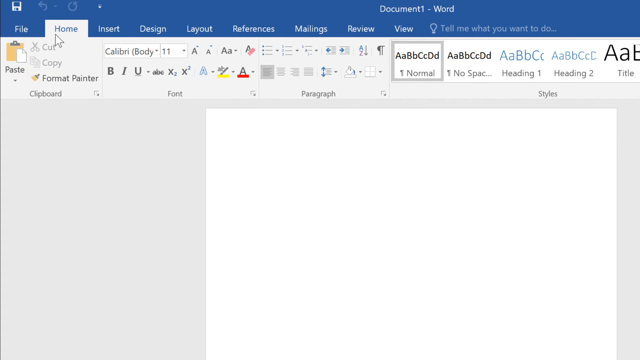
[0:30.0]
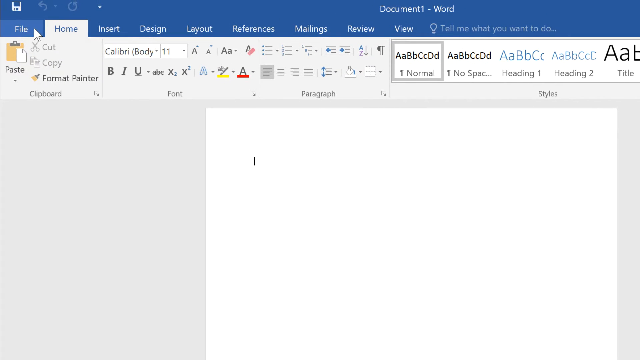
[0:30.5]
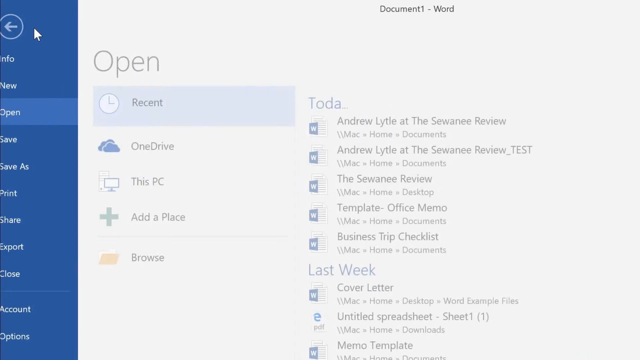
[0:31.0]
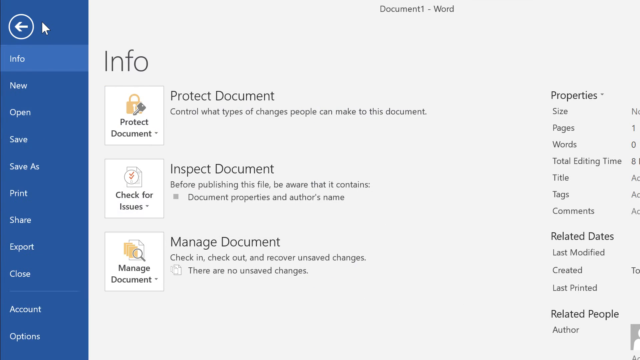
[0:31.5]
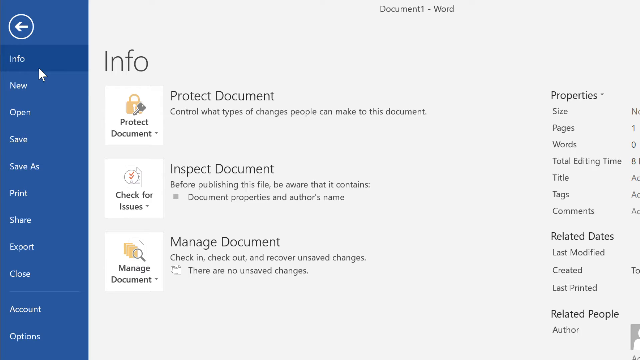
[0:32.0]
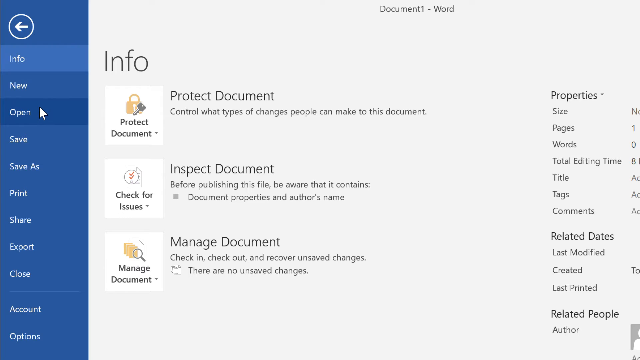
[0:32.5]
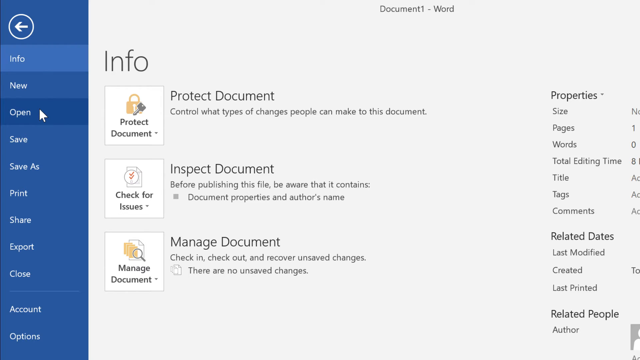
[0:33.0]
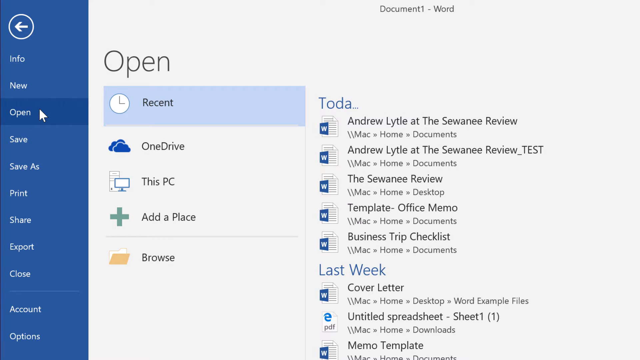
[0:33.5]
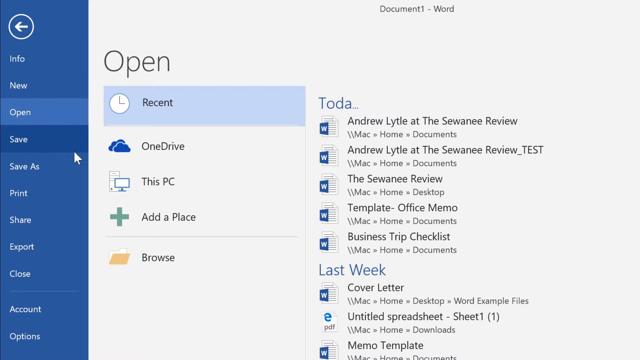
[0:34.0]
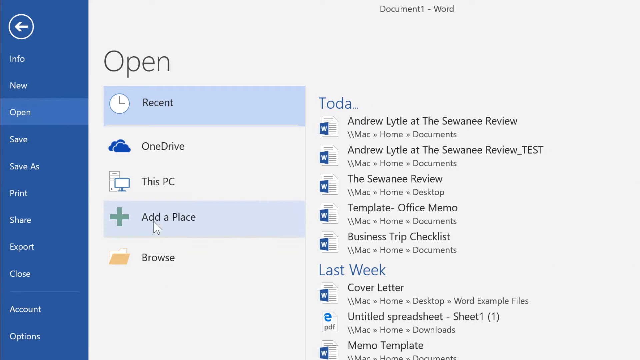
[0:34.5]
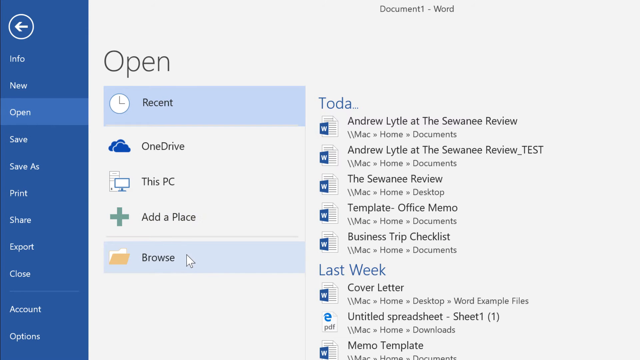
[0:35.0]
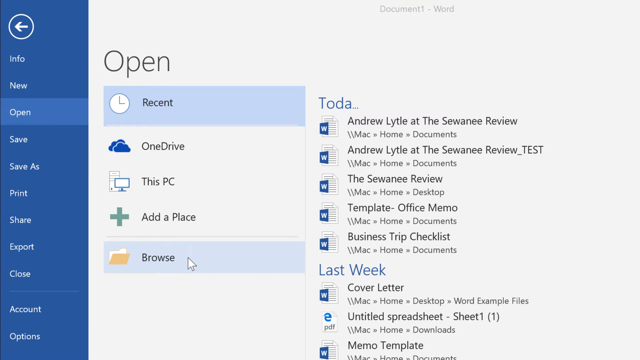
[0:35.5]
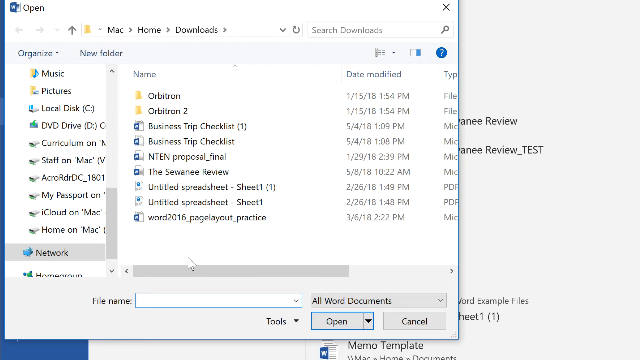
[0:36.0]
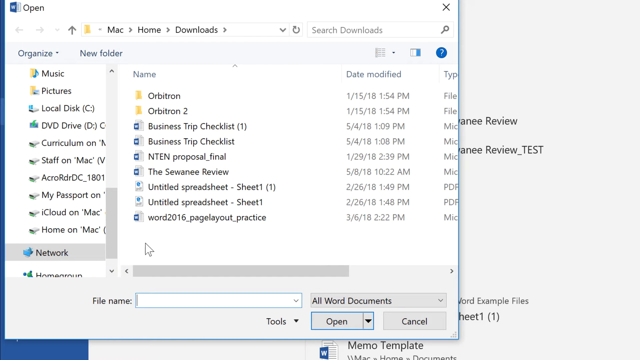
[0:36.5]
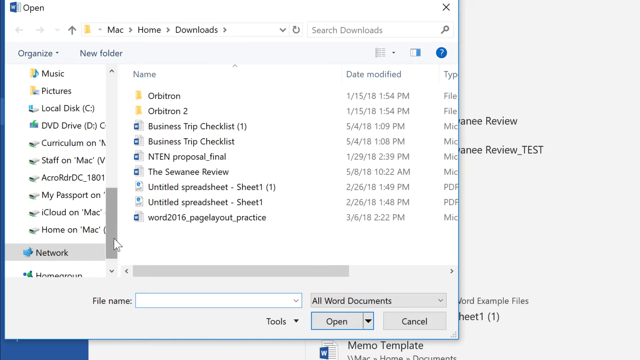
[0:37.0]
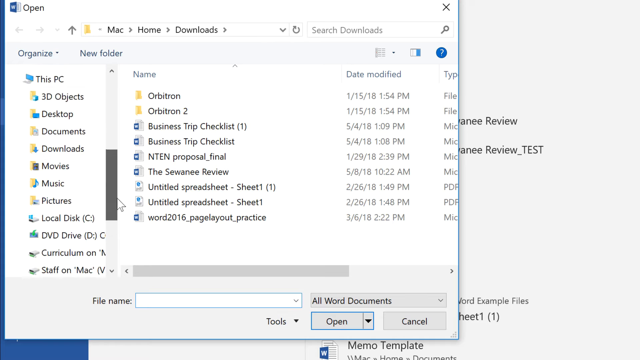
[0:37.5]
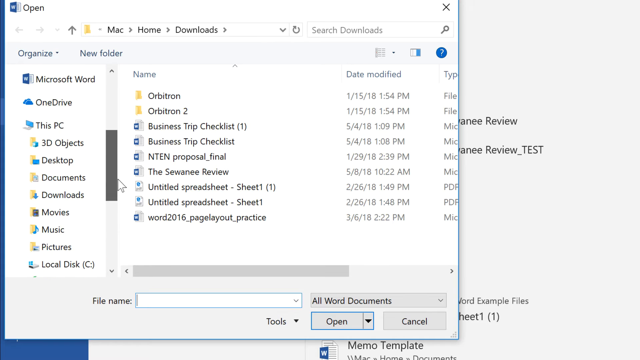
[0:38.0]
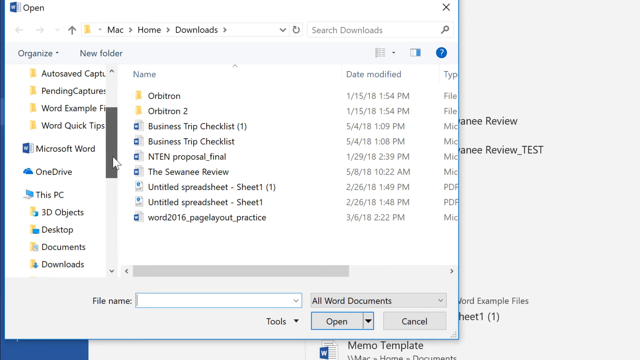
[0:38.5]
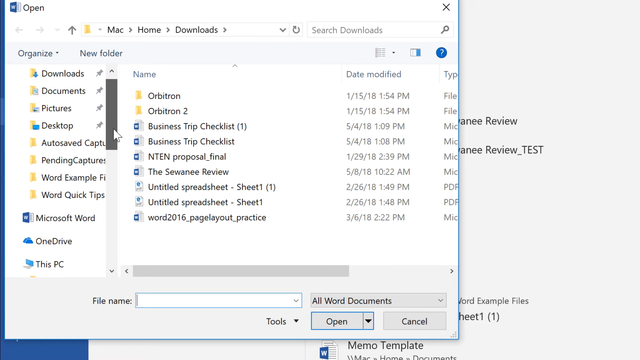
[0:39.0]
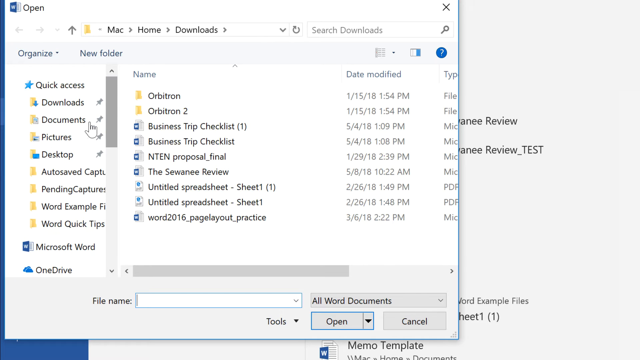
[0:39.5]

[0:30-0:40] Word is open on document one, which indicates nothing has been saved yet. The user scrolls down to Open in the menu, looking for a document to open, and clicks on documents from their computer. The formatting is set to Normal, with the Calibri font at 11 point size.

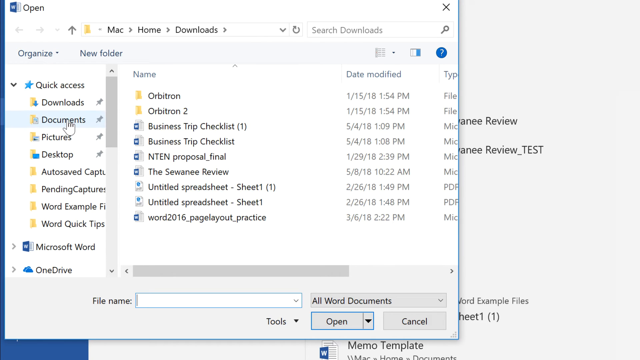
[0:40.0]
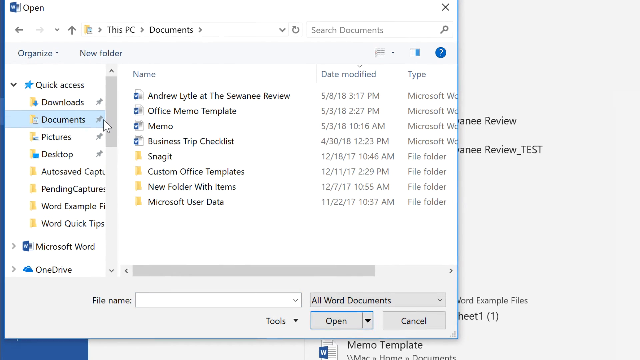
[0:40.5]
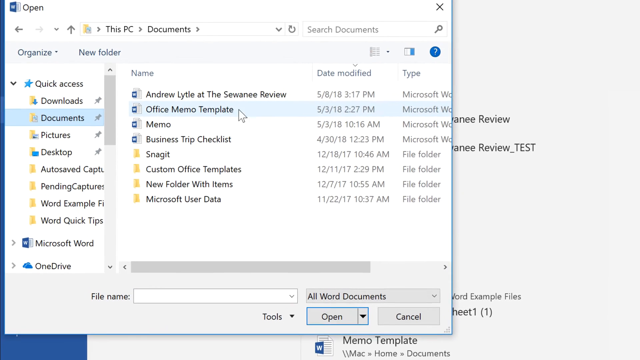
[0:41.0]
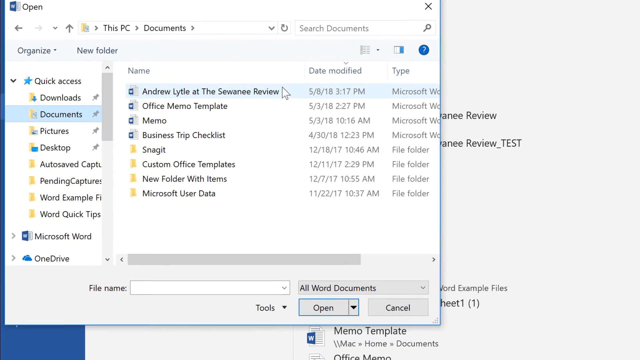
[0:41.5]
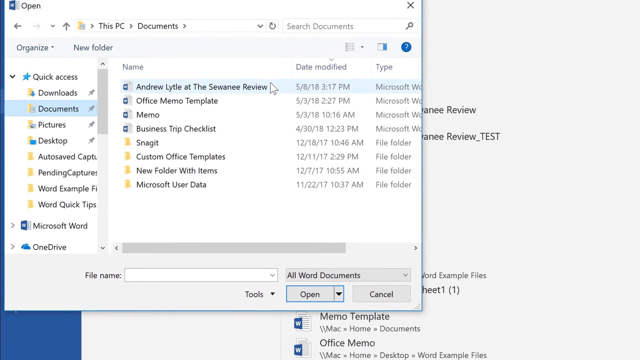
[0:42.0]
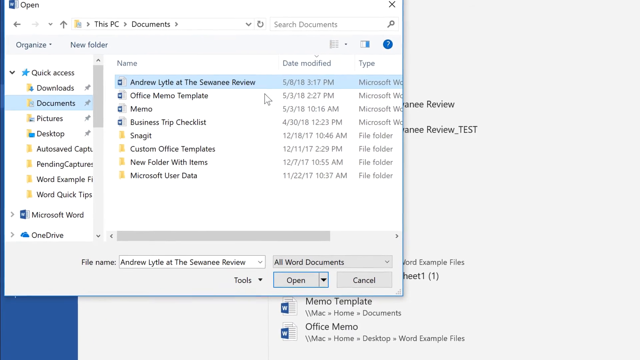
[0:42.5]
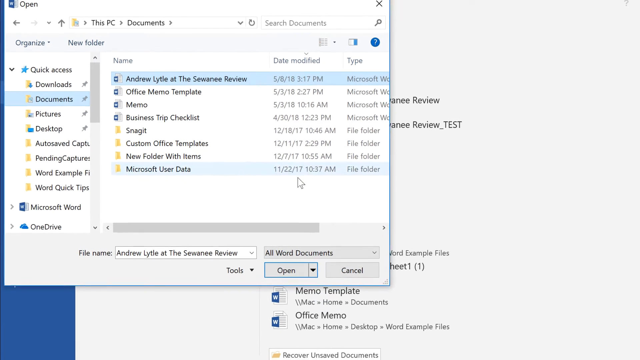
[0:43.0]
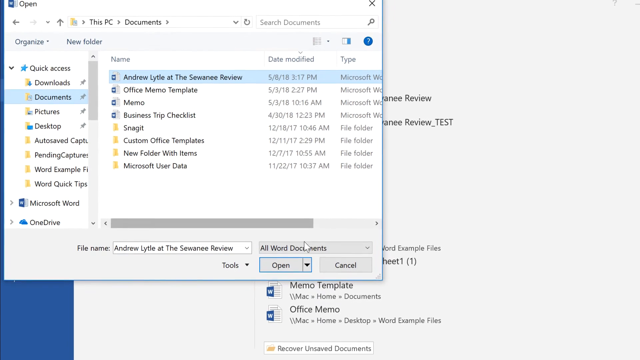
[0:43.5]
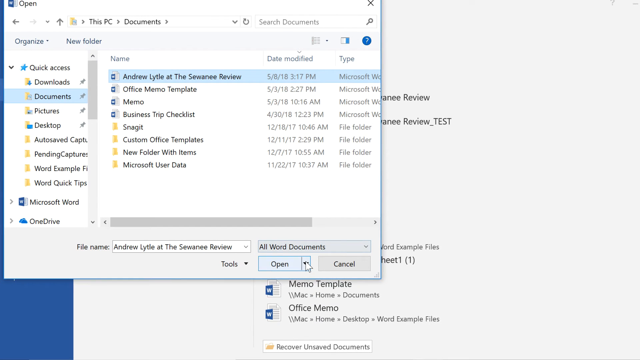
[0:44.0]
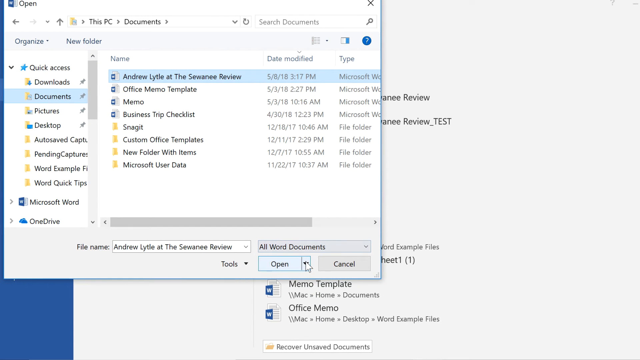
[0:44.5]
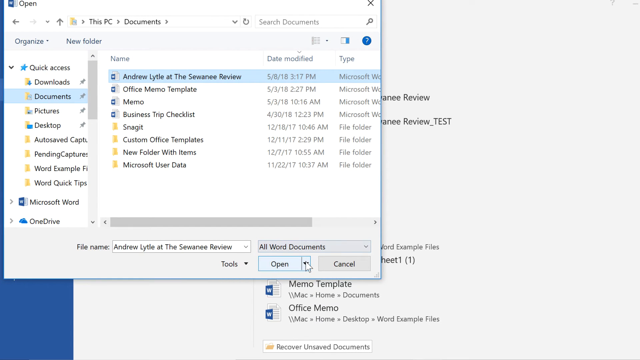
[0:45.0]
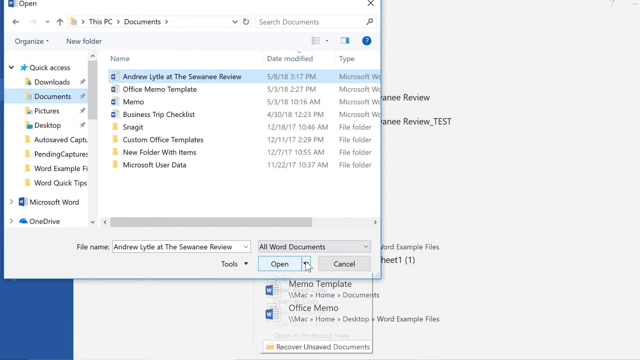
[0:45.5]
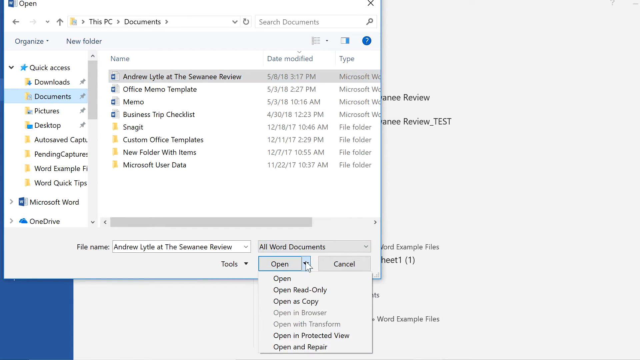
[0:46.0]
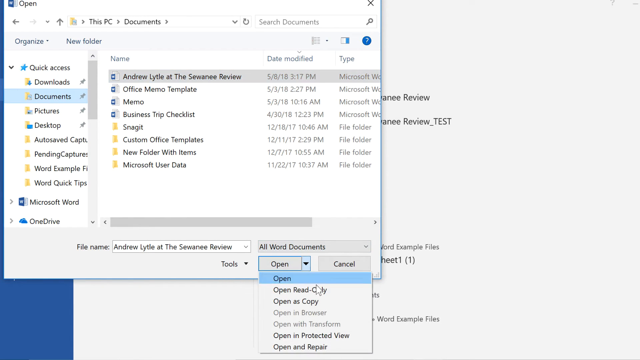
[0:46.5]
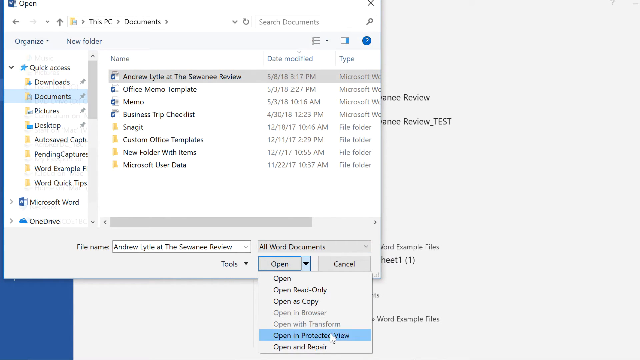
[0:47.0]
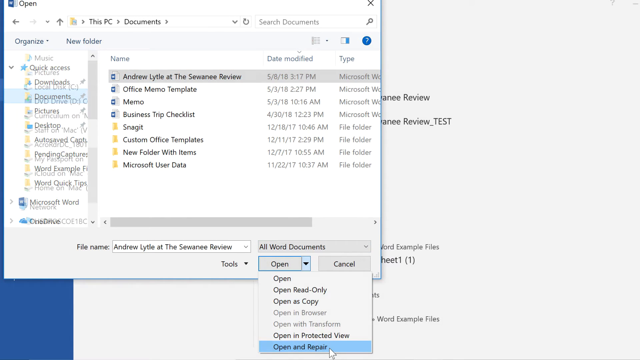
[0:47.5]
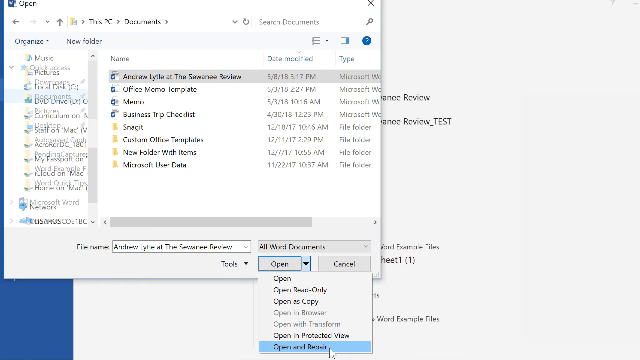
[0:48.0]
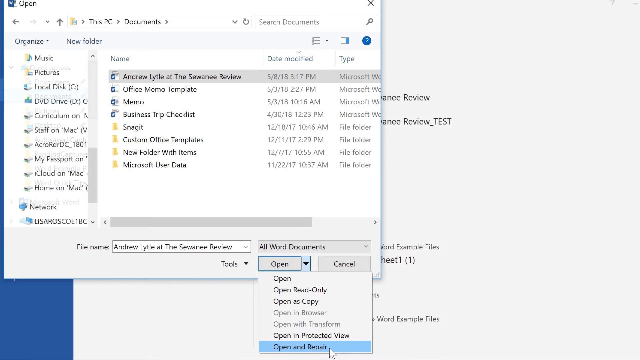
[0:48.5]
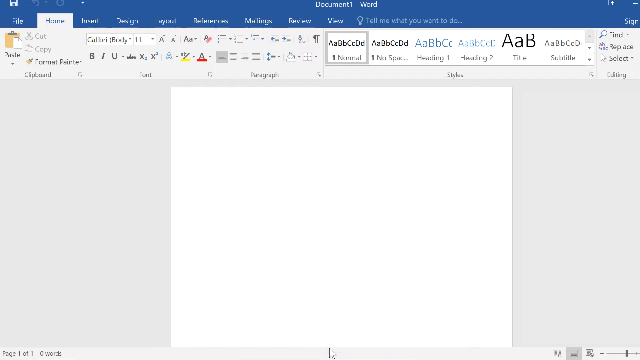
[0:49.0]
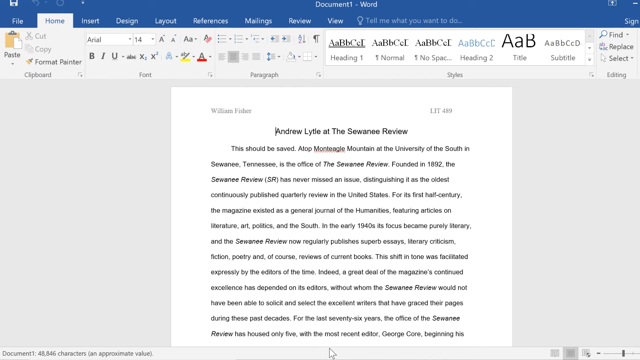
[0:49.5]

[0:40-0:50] The user, apparently on a Mac computer, navigates from Mac to Home to Downloads, then switches to Documents. They click on "Andrew Little at the Sewanee Review" and, from the drop-down on the Open button in the Open dialog box, choose Open and Repair. The file opens in Word.